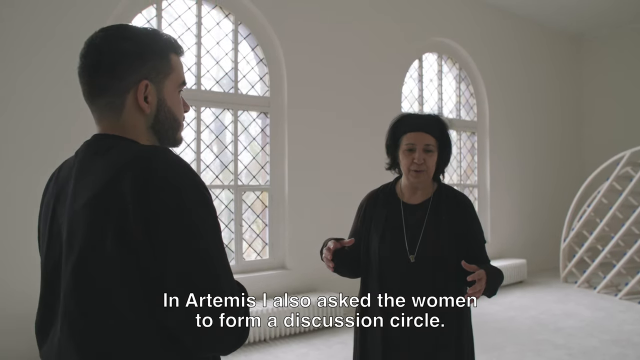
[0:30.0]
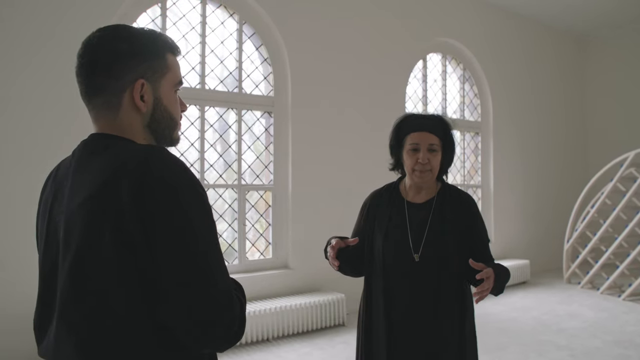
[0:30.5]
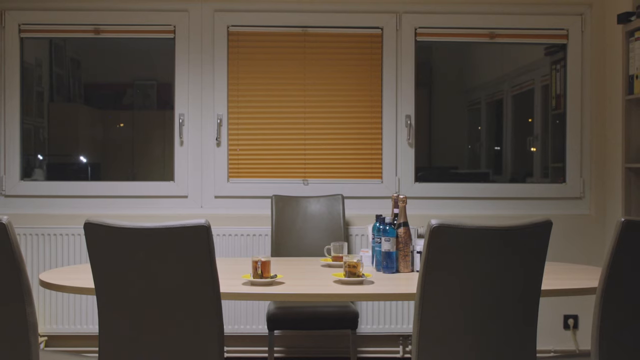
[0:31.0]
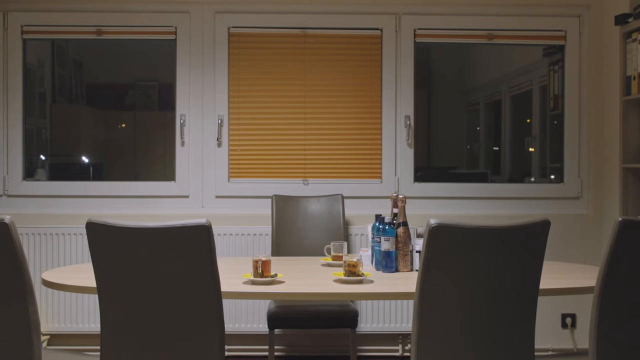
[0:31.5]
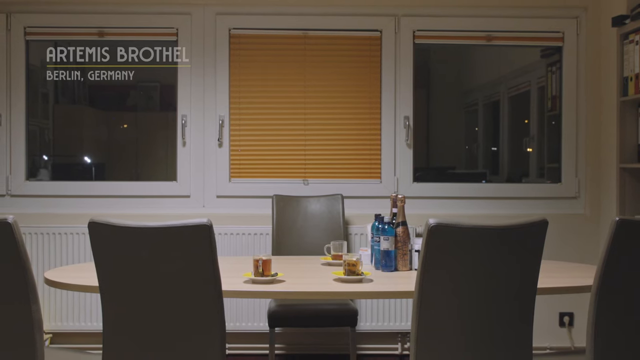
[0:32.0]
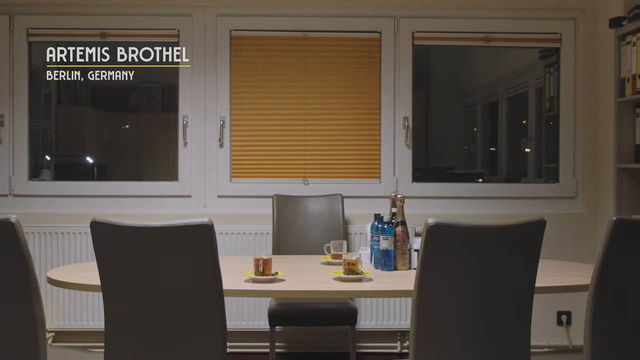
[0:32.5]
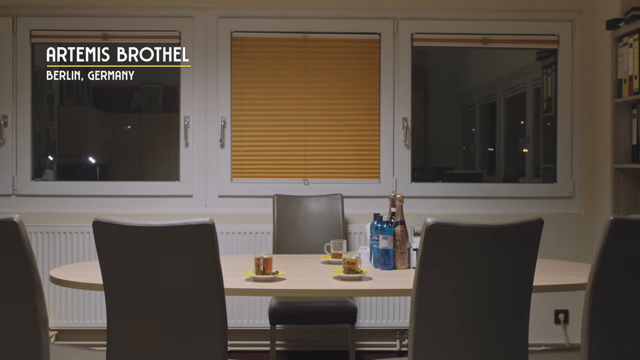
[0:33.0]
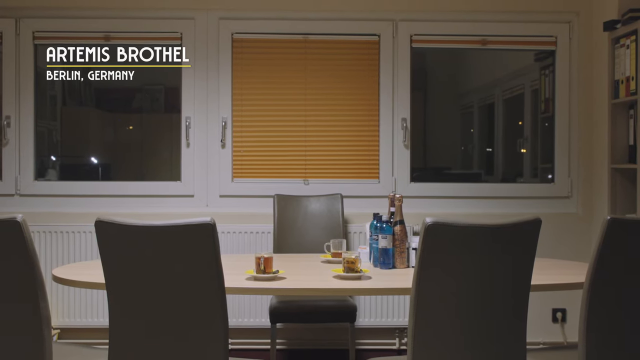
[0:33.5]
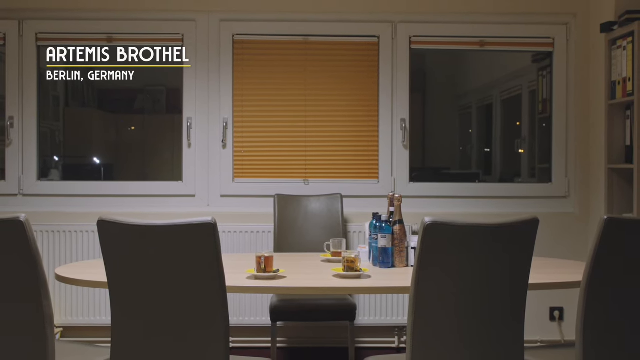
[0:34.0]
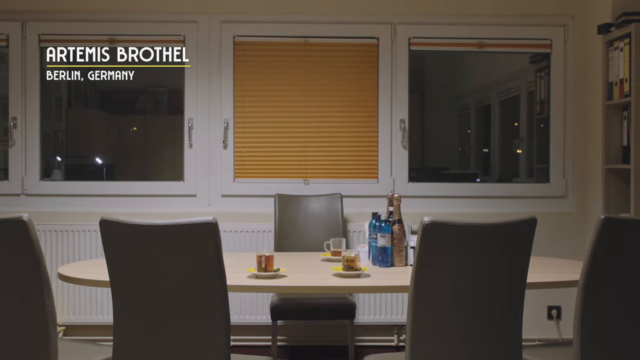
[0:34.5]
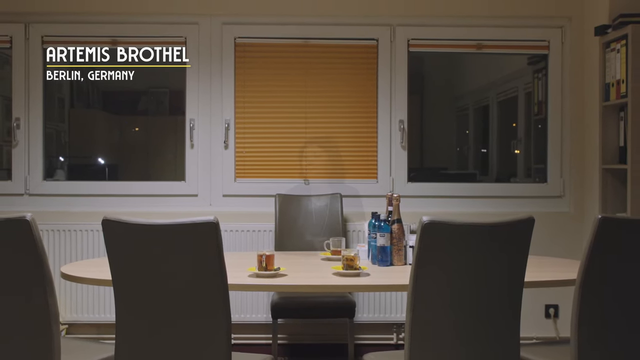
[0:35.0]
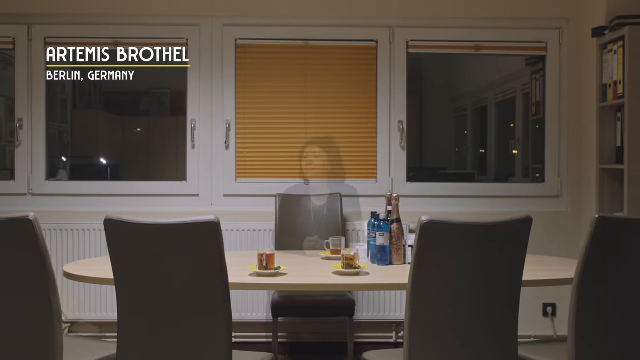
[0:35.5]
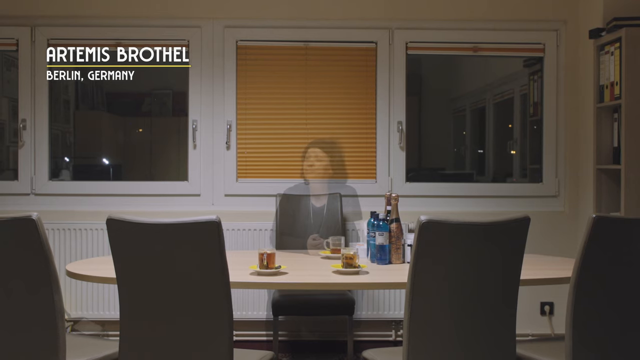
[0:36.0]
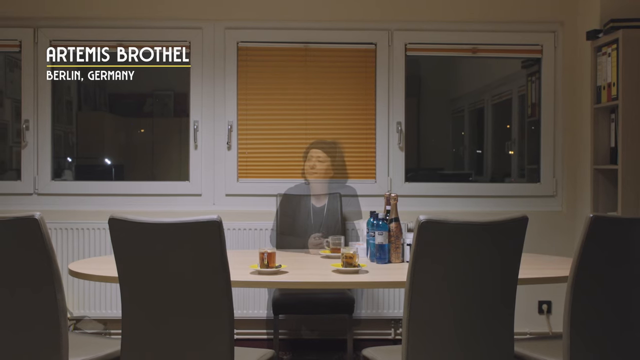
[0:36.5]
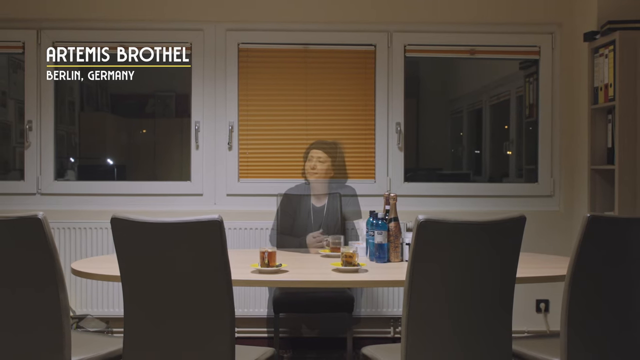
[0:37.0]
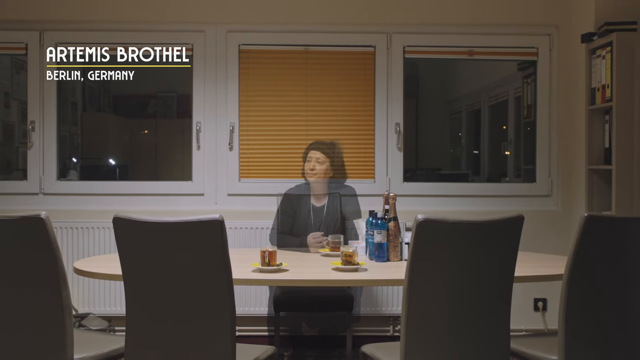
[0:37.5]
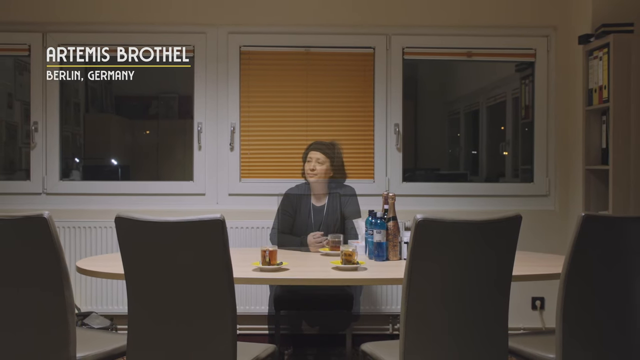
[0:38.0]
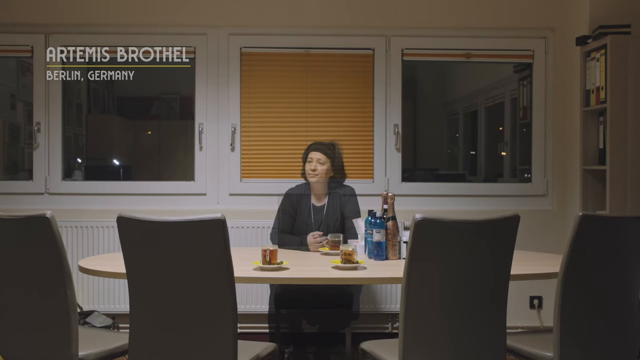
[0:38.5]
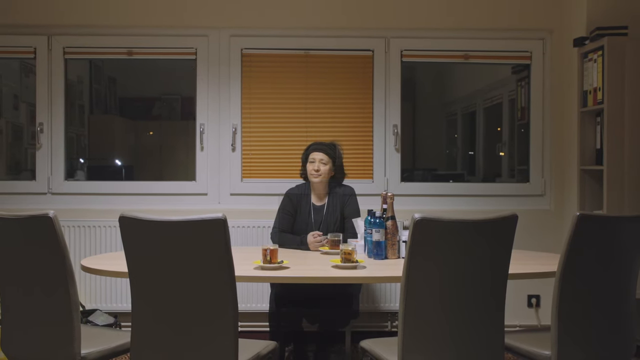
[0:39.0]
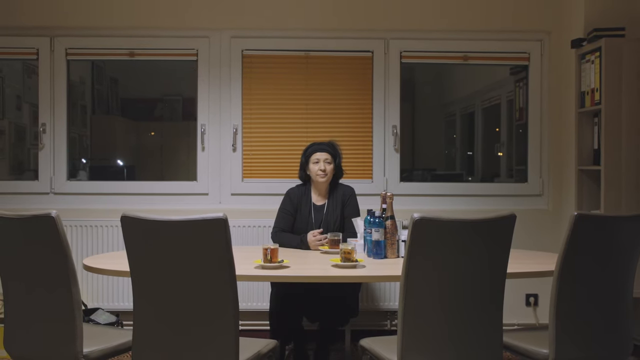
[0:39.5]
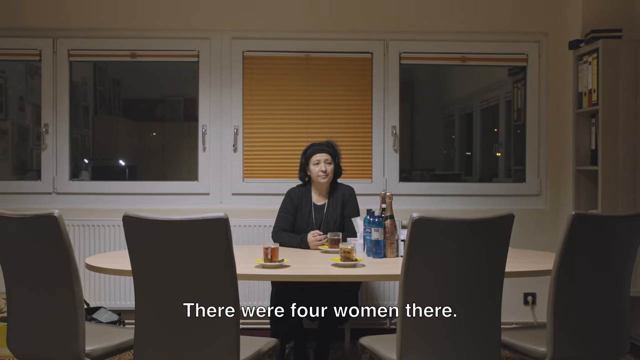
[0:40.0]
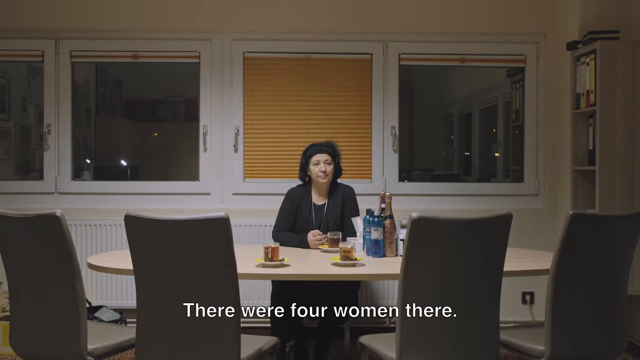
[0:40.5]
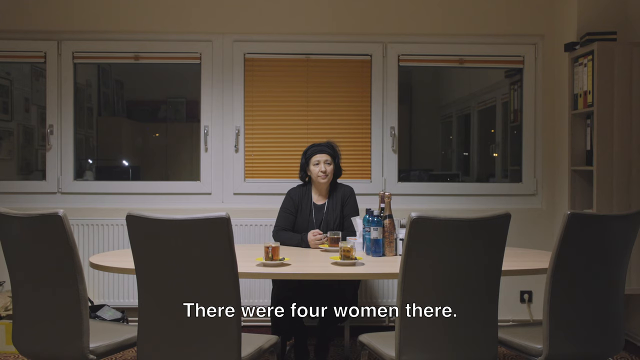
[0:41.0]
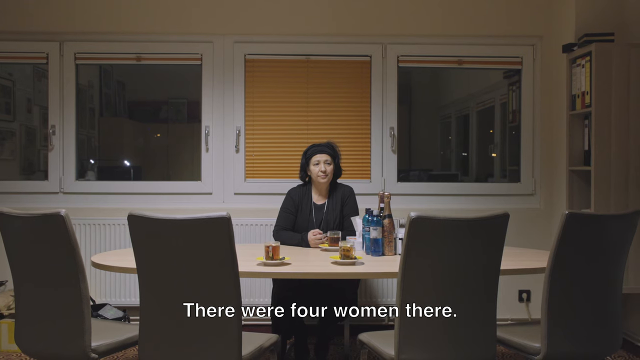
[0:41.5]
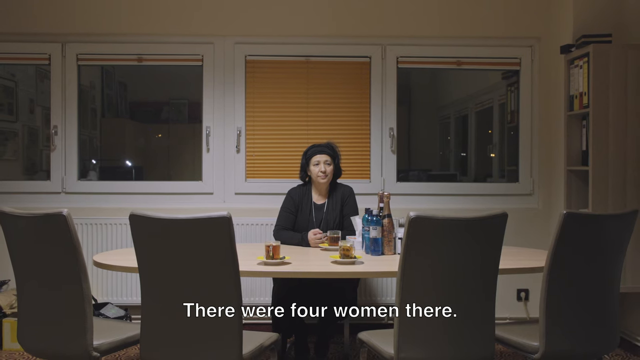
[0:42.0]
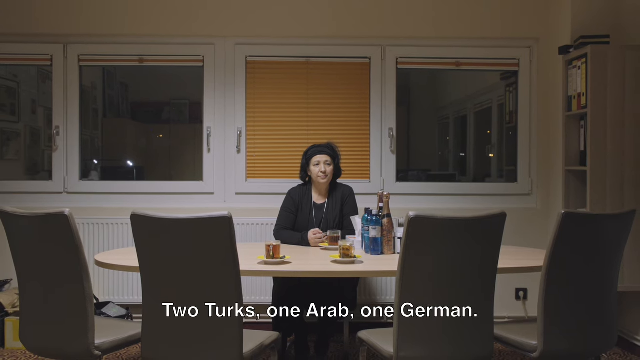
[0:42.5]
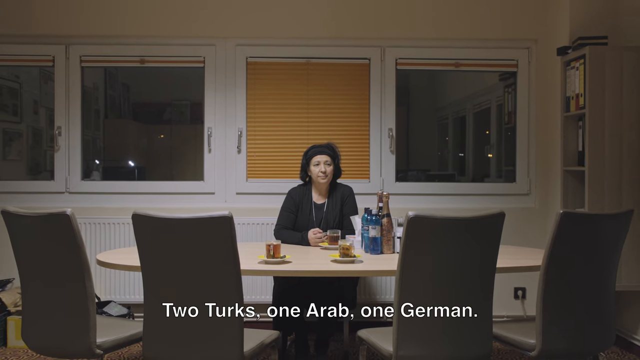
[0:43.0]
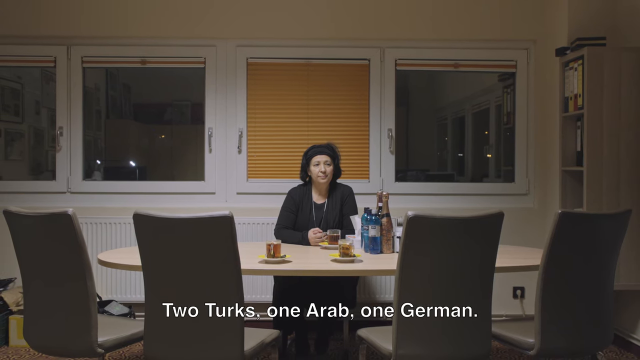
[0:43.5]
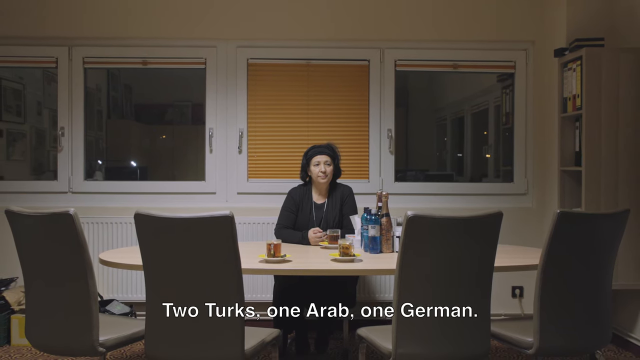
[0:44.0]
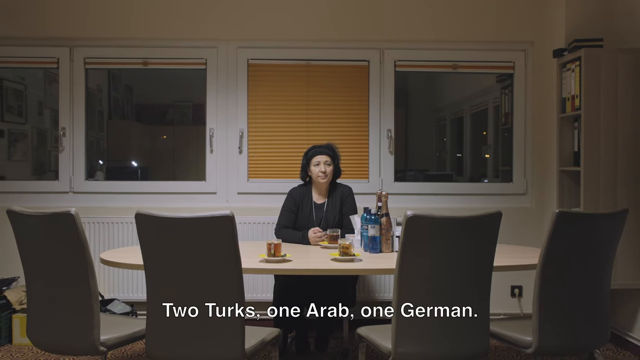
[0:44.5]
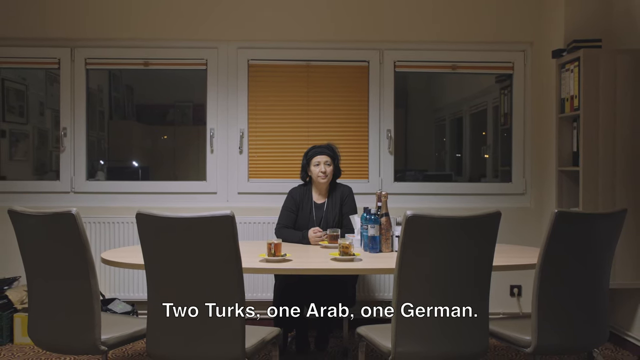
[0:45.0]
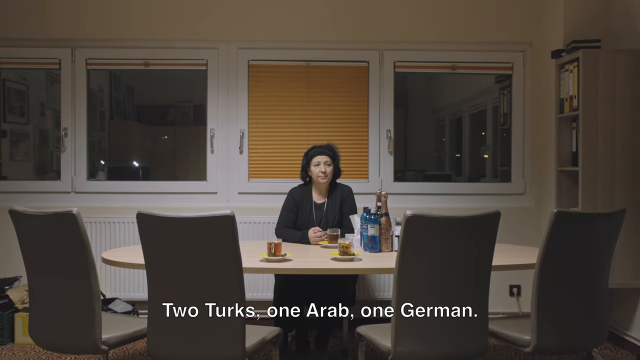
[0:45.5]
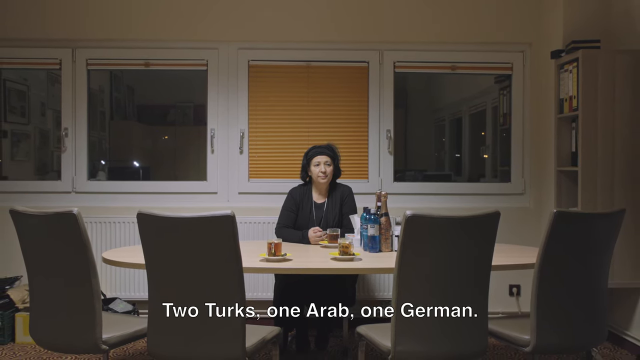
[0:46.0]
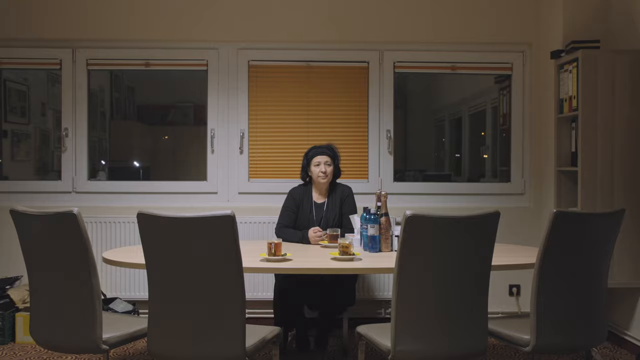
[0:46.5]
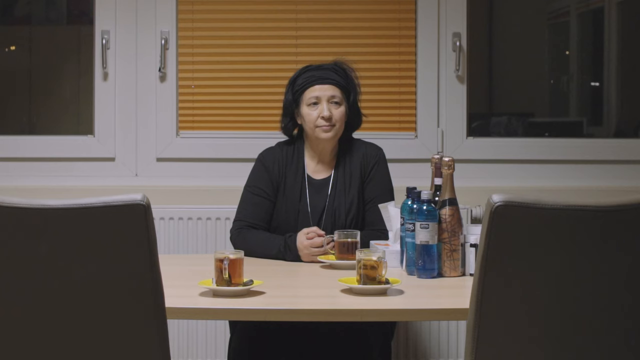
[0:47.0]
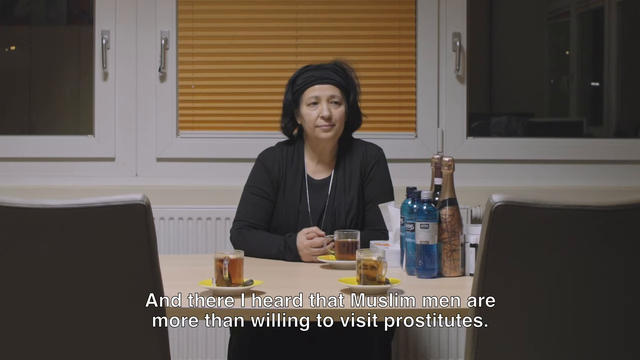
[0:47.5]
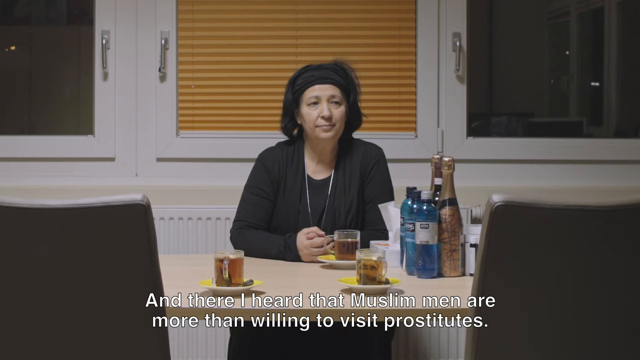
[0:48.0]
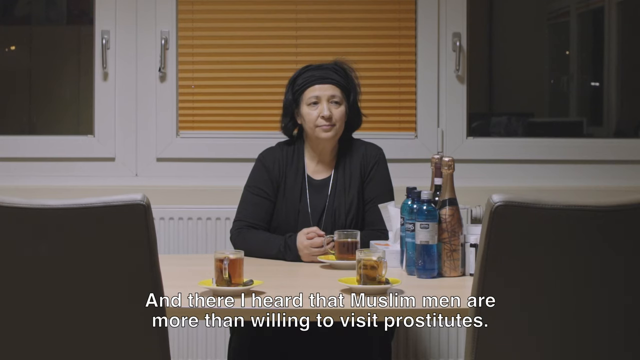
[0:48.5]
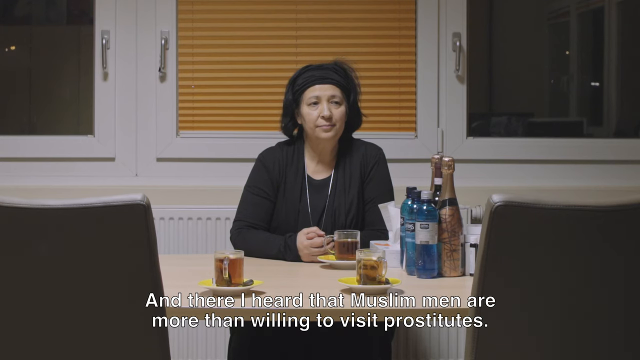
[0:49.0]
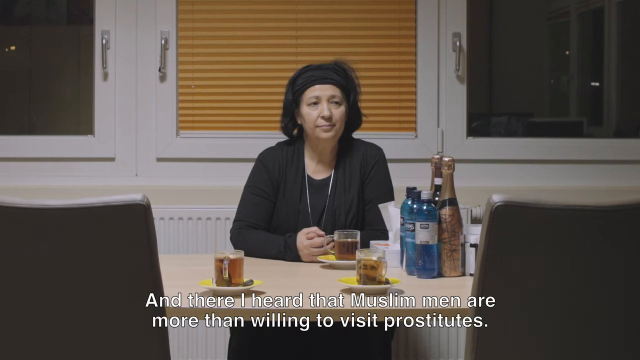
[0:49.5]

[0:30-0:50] The woman and the man talk very briefly. The shot cuts to a dining table with some chairs, where the same middle-aged lady is sitting. Text in the top left corner mentions a brothel and Germany. There appear to be drinks on the table: one in front of her and maybe two others for people who are not there yet, along with two wine bottles and maybe some water bottles. It is nighttime: the dining room has a few windows, and only one has its gold-ish wooden blinds pulled down, so through the others the night outside is visible, with what looks like some type of building or streetlights. An outlet is in the bottom right corner on the floor, and a bookcase is a few feet away from the woman. The table is a light wood color. She sits with a neutral look, looking out to the right, and seems to be waiting for someone to join her.